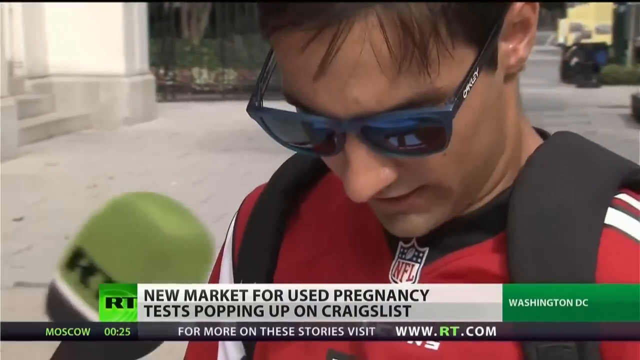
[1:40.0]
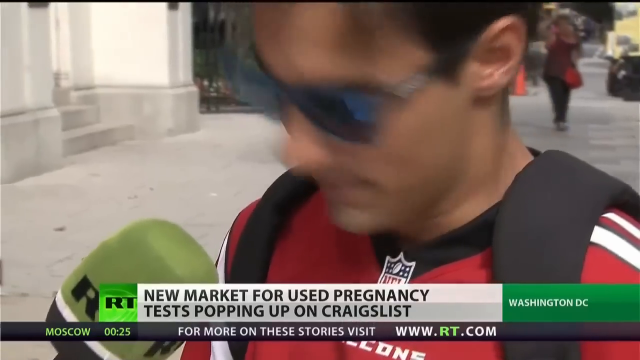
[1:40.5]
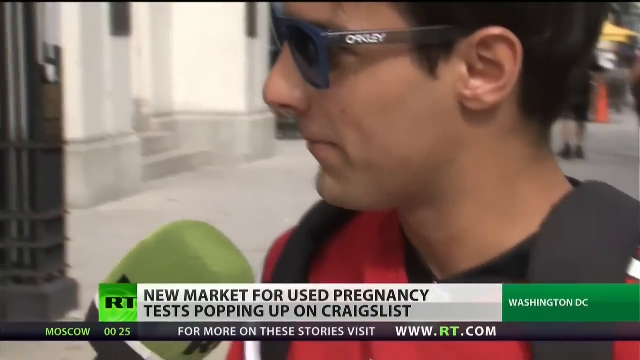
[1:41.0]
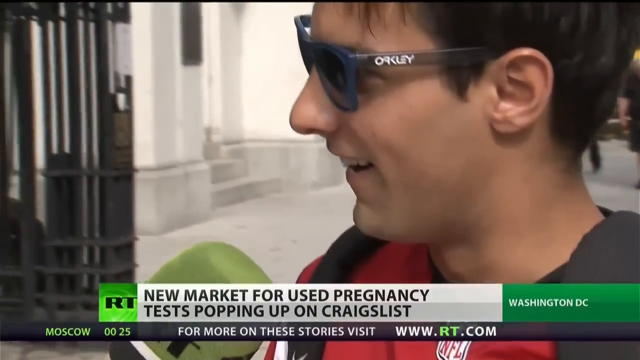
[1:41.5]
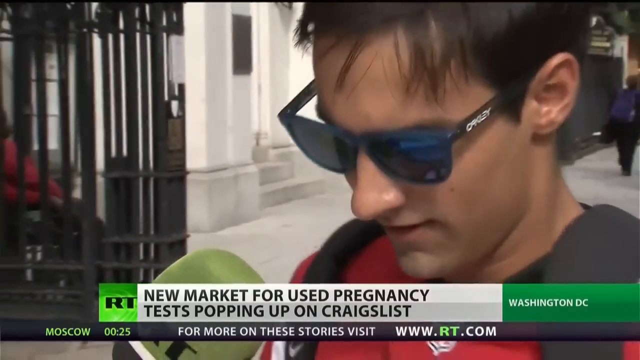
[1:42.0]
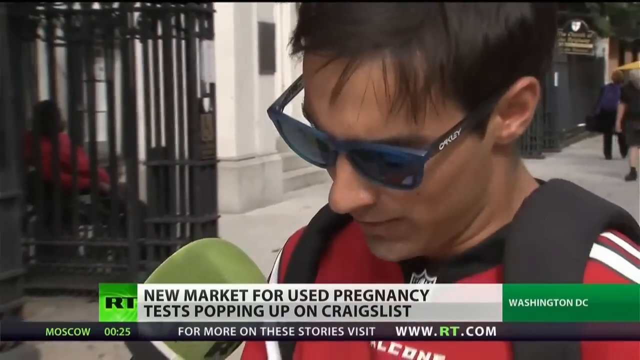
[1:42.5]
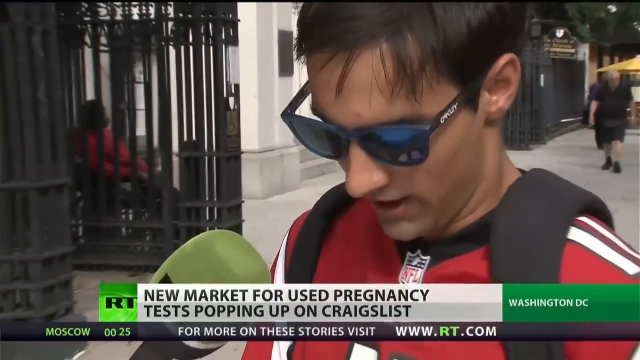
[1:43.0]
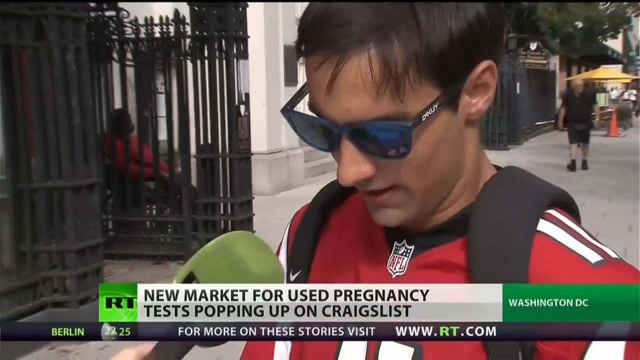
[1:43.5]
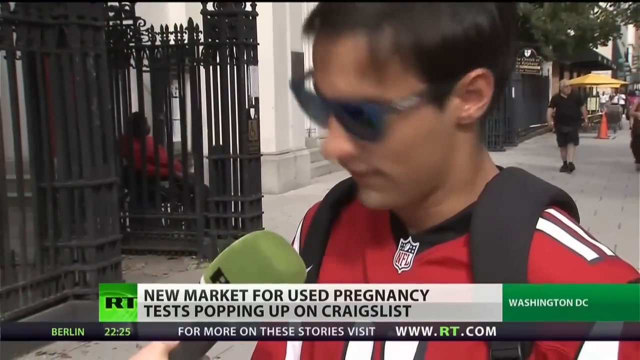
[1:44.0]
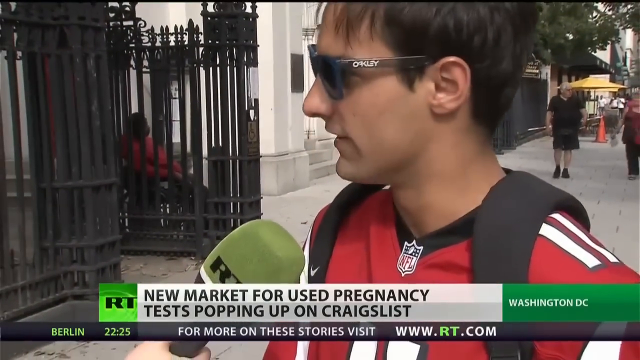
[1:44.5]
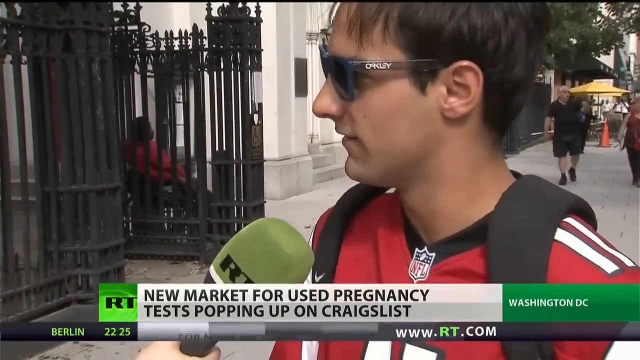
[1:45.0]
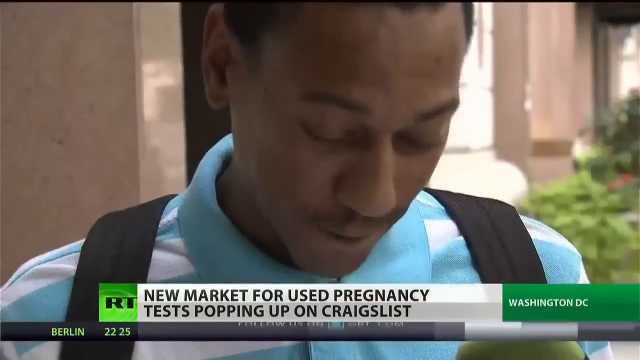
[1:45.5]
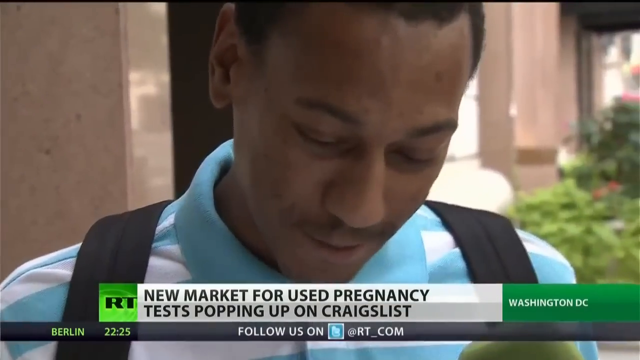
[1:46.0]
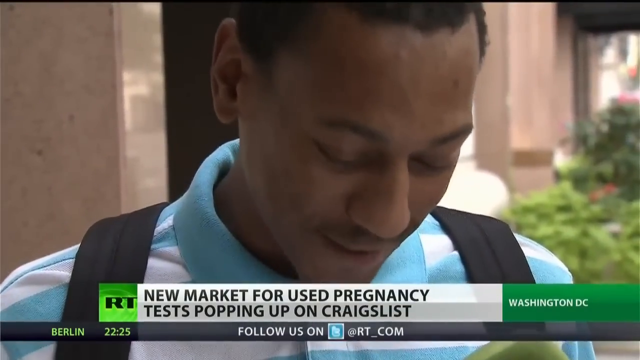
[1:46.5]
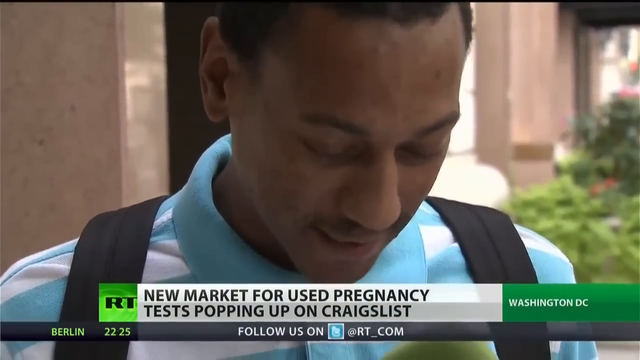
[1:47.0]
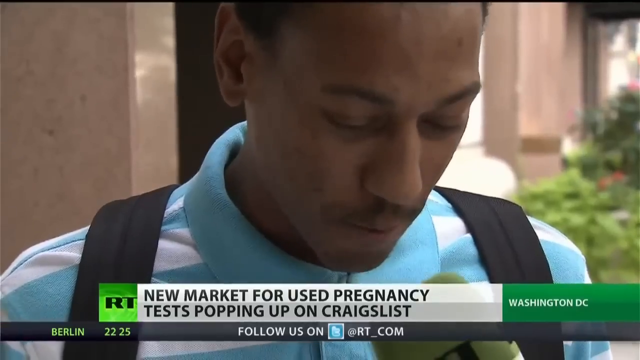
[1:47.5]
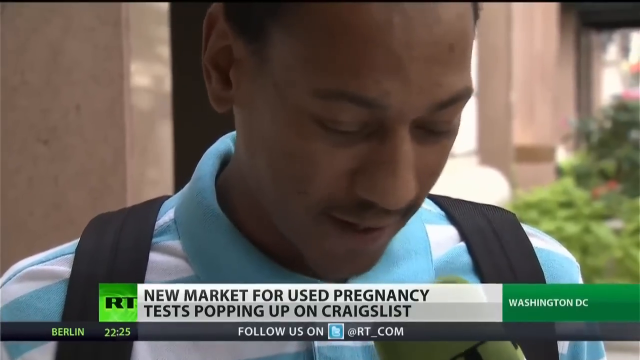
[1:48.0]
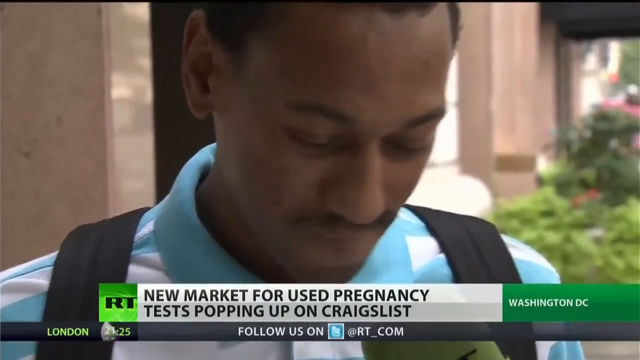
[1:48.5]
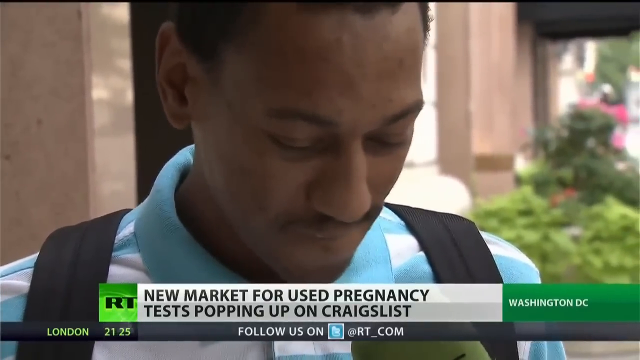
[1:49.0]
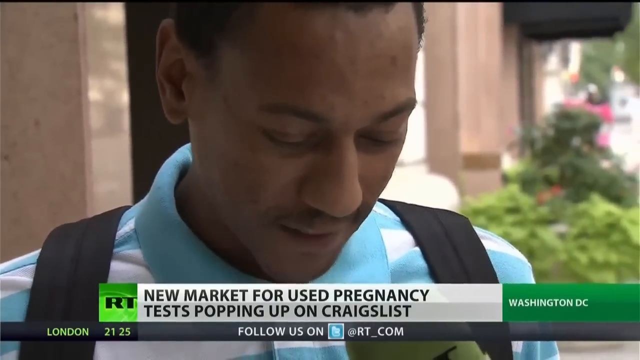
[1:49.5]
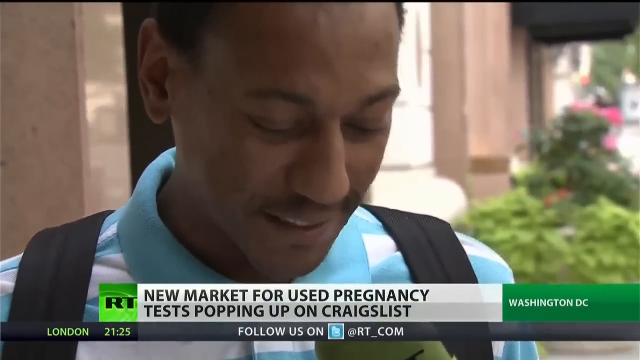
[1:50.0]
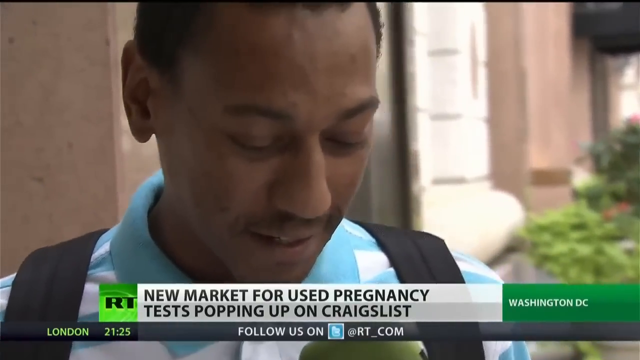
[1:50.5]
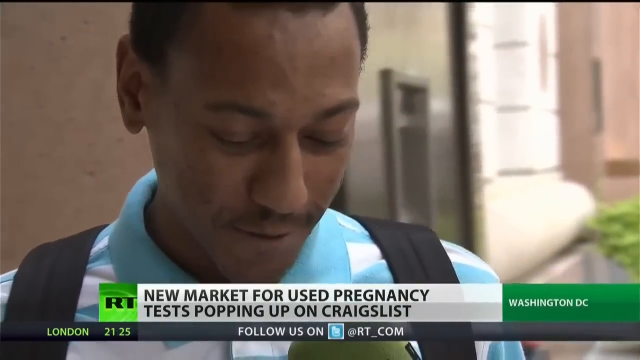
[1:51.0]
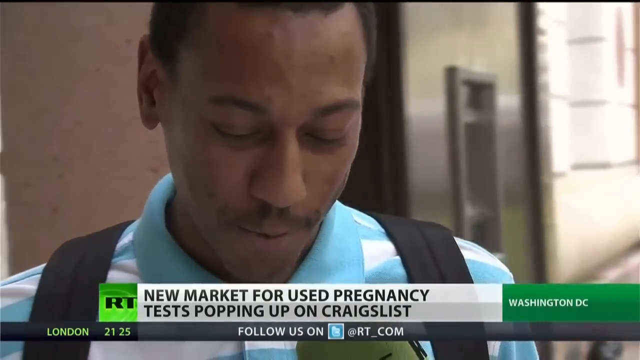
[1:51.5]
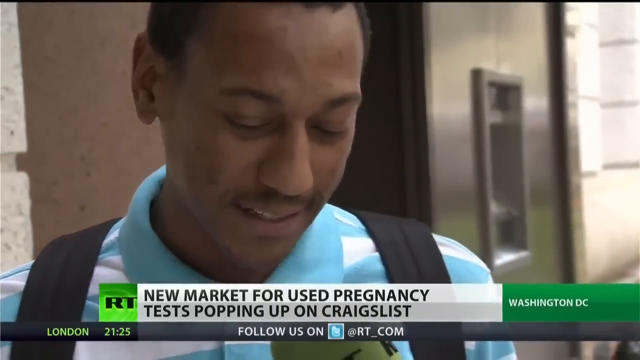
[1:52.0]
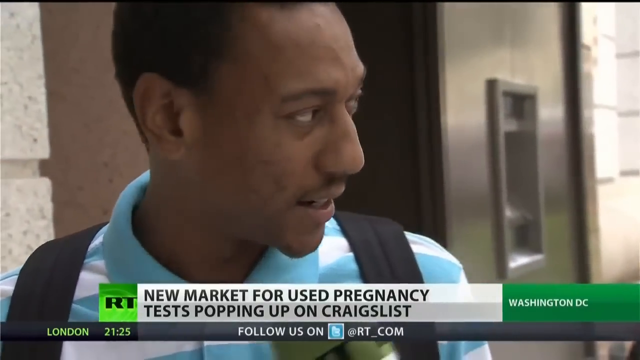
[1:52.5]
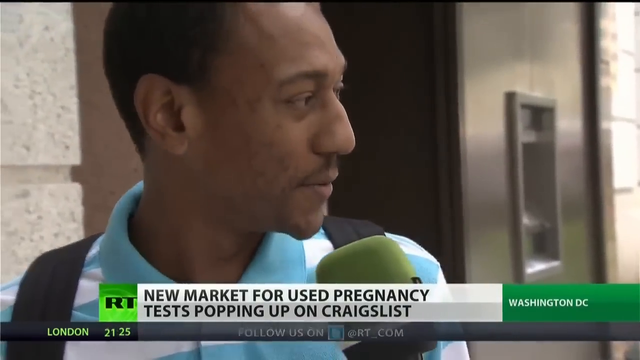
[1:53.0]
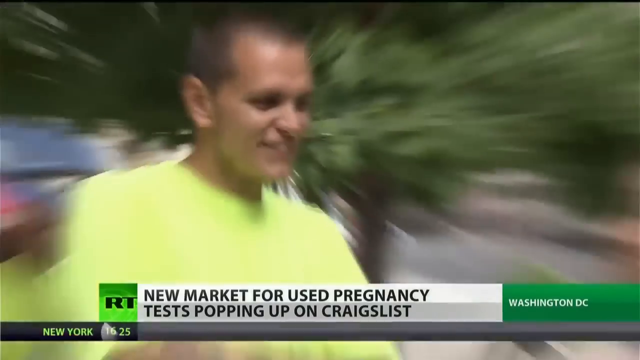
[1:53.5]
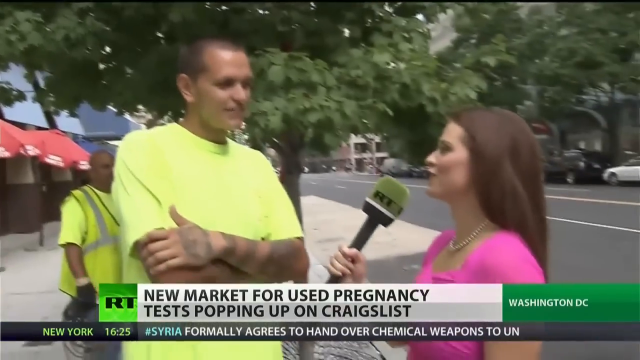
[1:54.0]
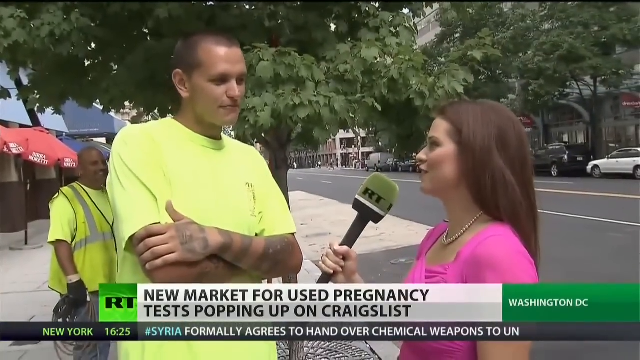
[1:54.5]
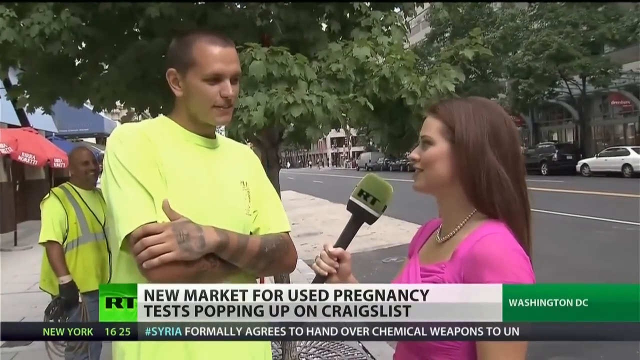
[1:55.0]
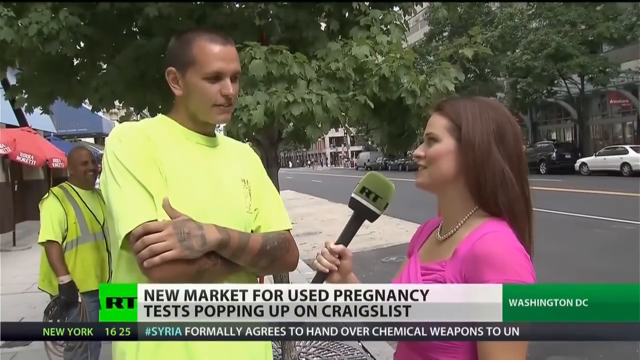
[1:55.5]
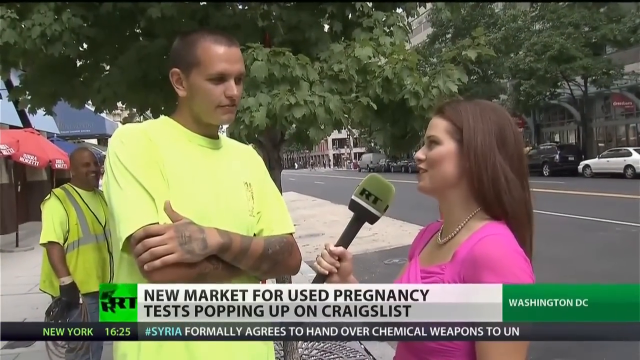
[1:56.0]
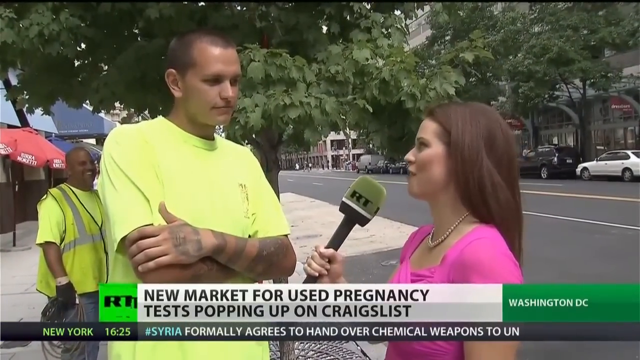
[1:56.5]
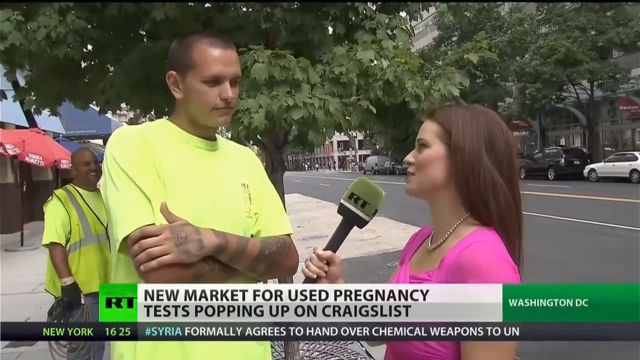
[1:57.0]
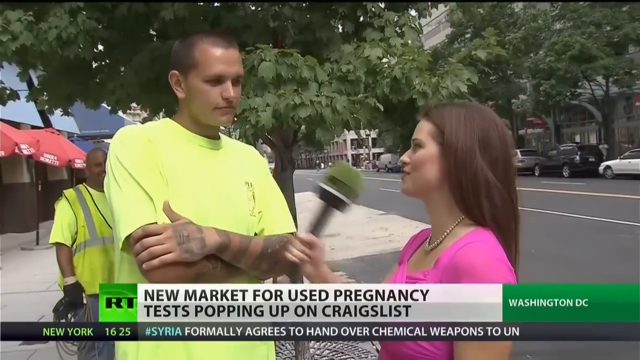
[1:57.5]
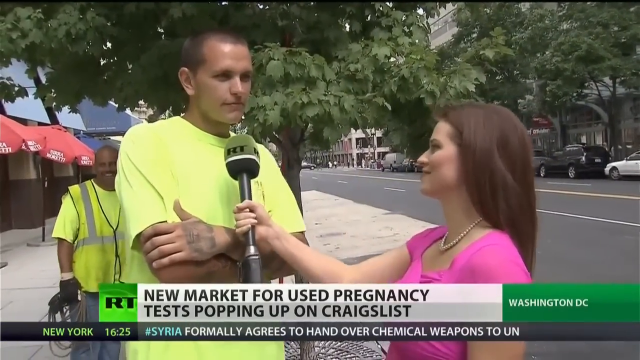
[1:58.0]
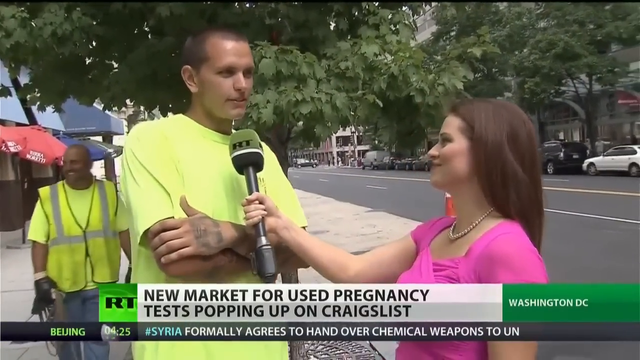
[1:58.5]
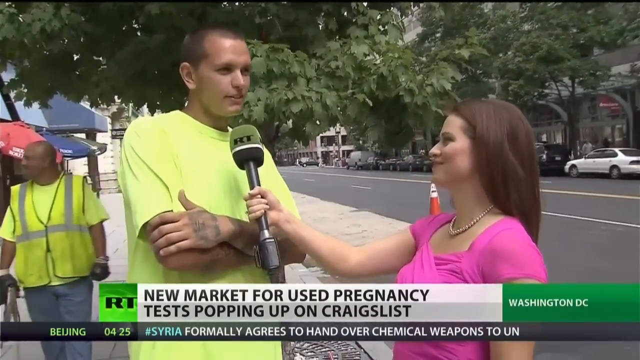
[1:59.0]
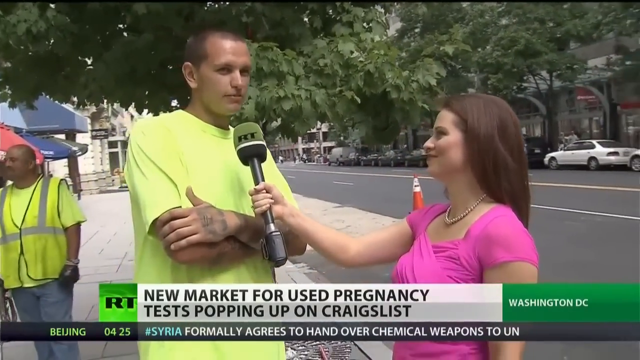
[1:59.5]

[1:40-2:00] Street interviews continue. A man standing on the right, in a red shirt with an NFL logo in the center and glasses, has a microphone in front of him and looks up as he talks to the interviewer. Next is a close-up of the face of a man in a blue and white striped shirt as he talks into the microphone in front of him. Then a woman in a pink shirt stands on the right, interviewing a man in a yellow shirt to the left; behind him is another man in a yellow shirt and a yellow vest. The interviewed man has his arms crossed and looks down at her as she asks the question. She puts the microphone up in front of him and he gives a very short answer. Text at the bottom of the screen reads "New market for used pregnancy tests popping up on Craigslist," with "Washington, D.C." to the right and "For more on these stories, visit www.rt.com" below. The bottom of the screen then changes to "Follow us on Twitter at RT.com," then "Syria formally agrees to hand over chemical weapons to UN."